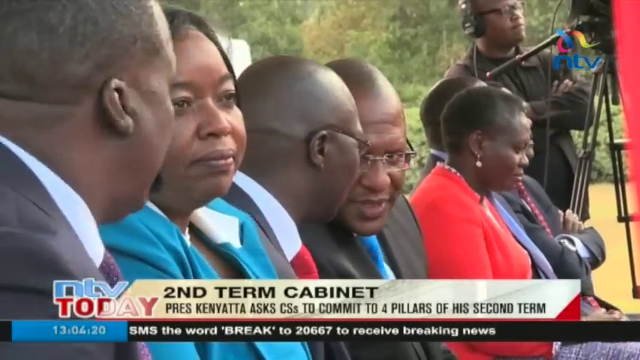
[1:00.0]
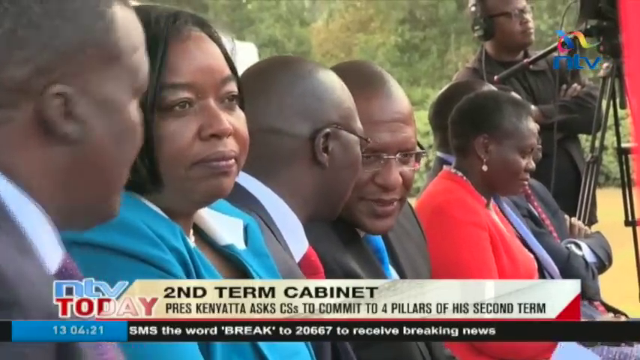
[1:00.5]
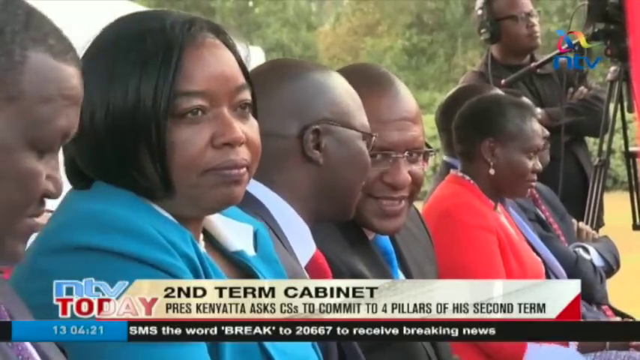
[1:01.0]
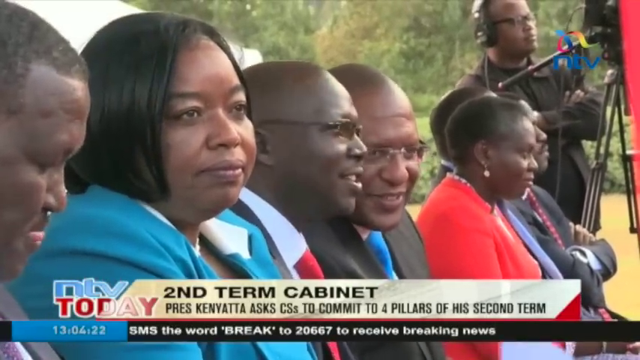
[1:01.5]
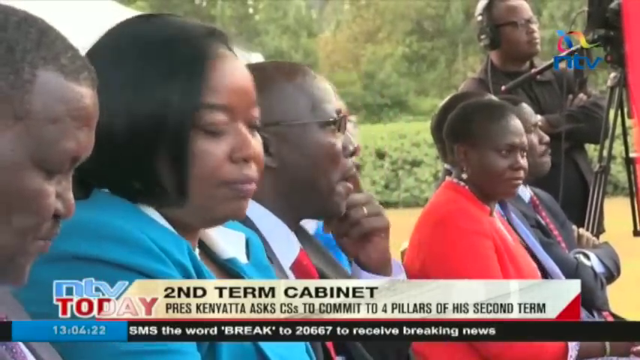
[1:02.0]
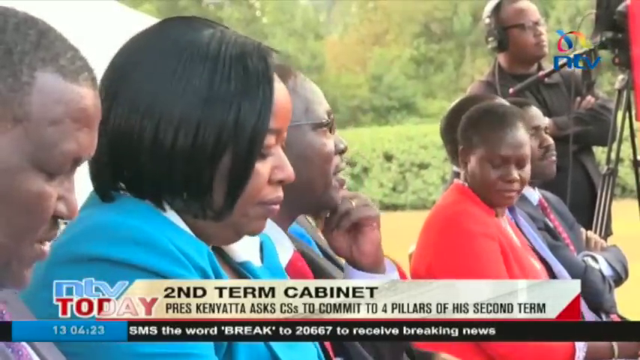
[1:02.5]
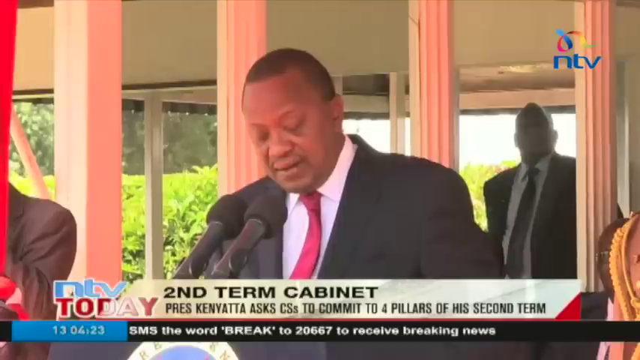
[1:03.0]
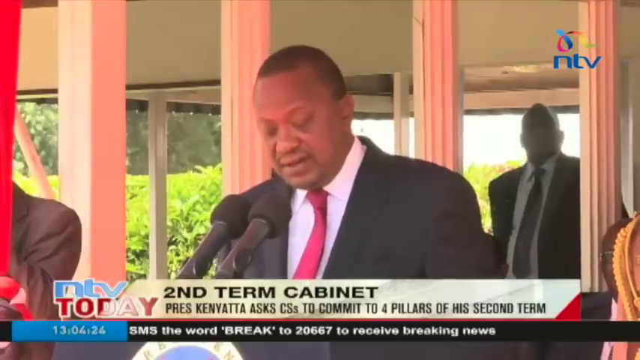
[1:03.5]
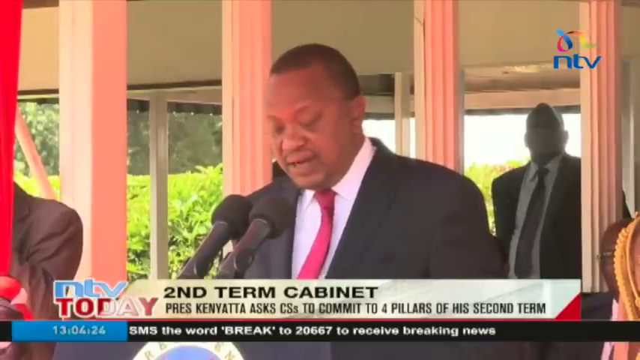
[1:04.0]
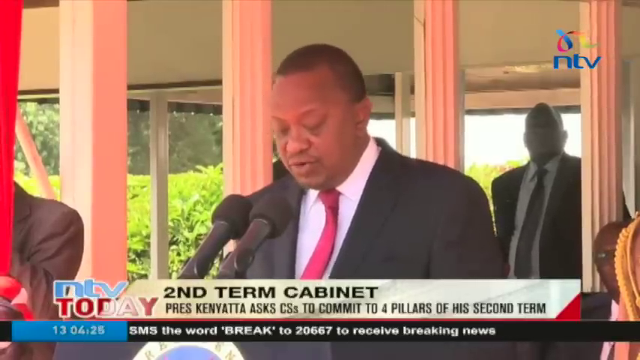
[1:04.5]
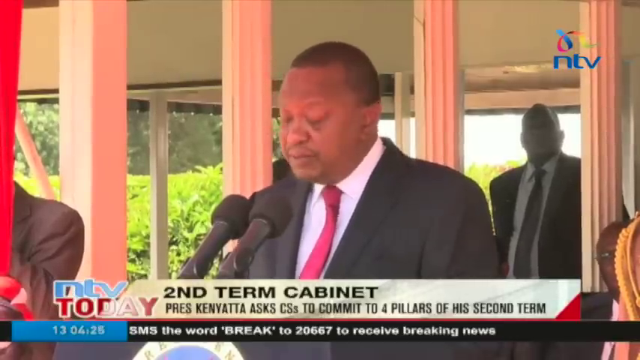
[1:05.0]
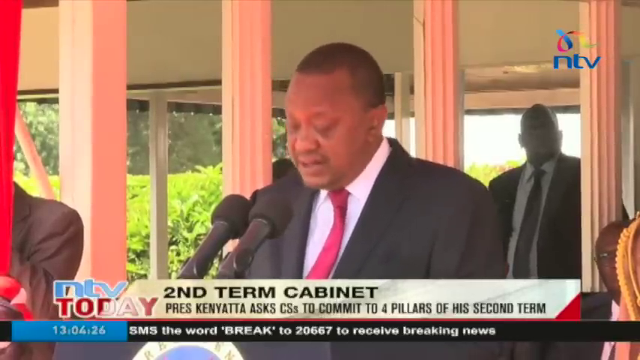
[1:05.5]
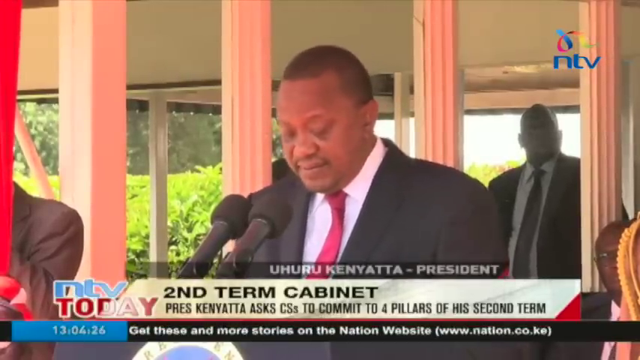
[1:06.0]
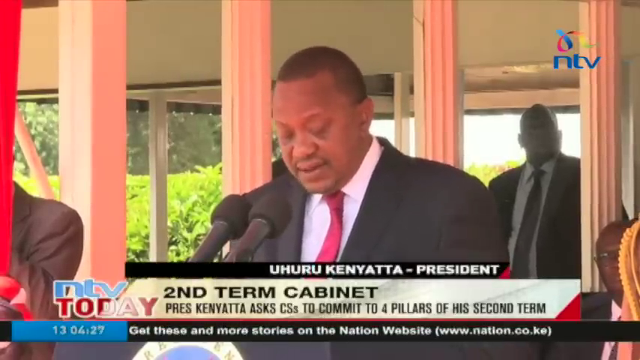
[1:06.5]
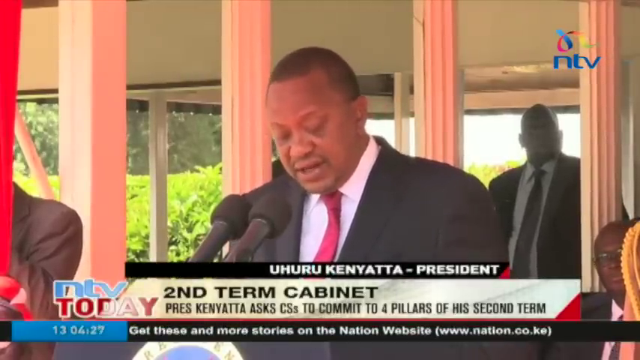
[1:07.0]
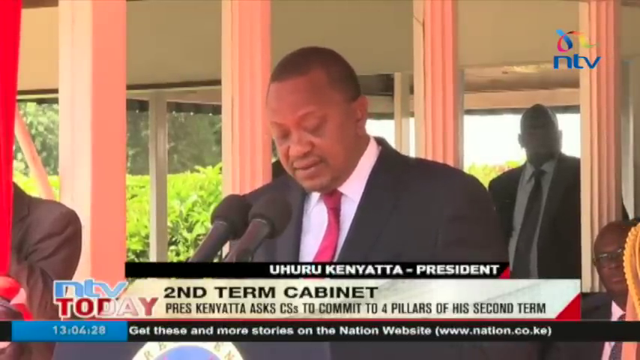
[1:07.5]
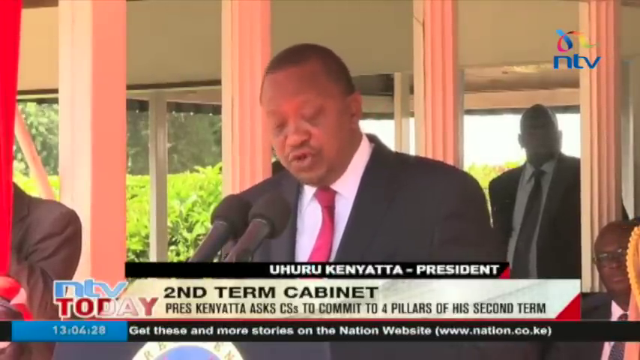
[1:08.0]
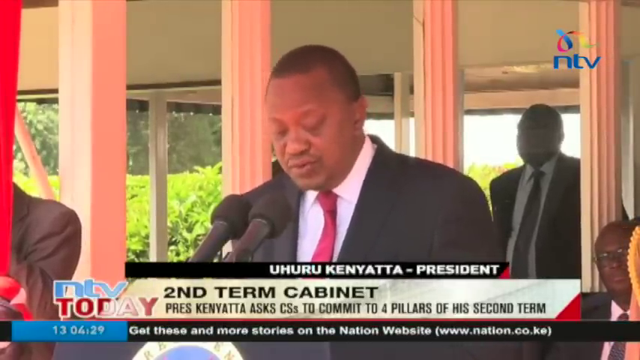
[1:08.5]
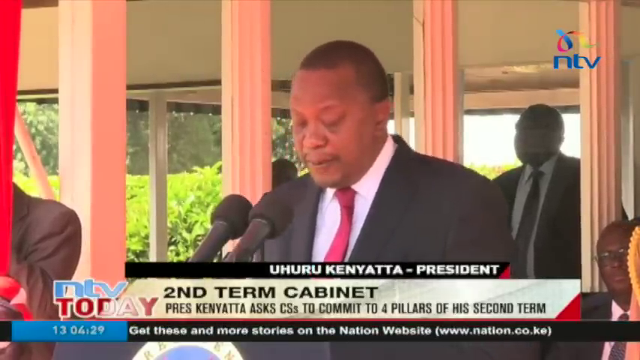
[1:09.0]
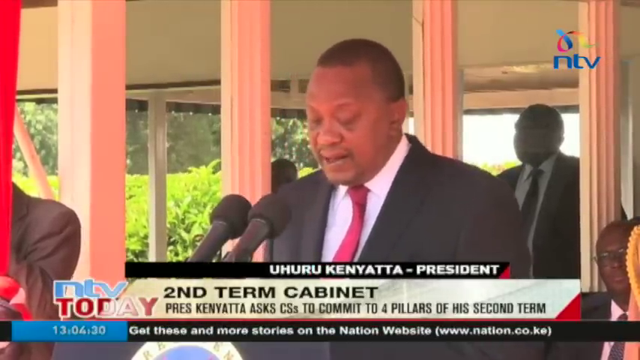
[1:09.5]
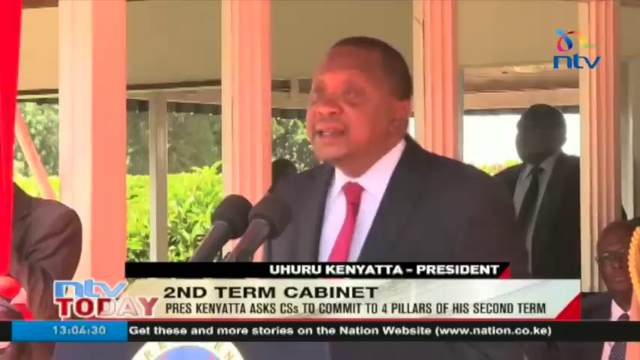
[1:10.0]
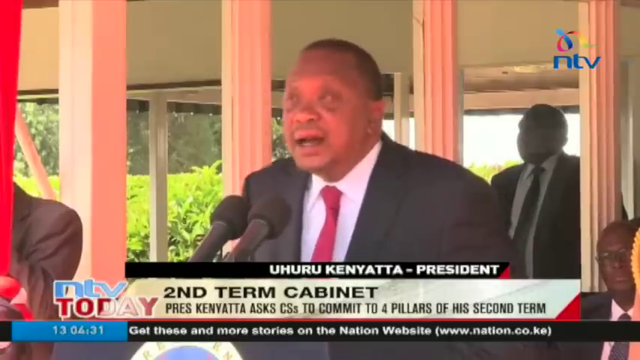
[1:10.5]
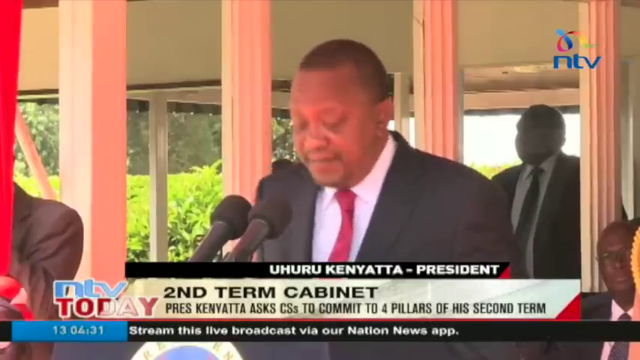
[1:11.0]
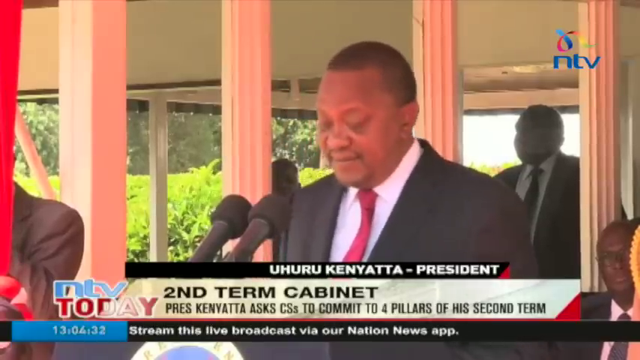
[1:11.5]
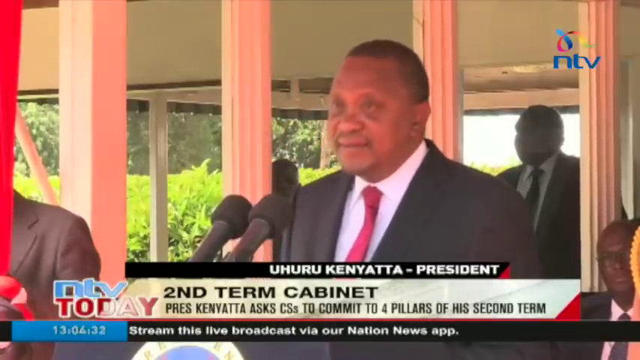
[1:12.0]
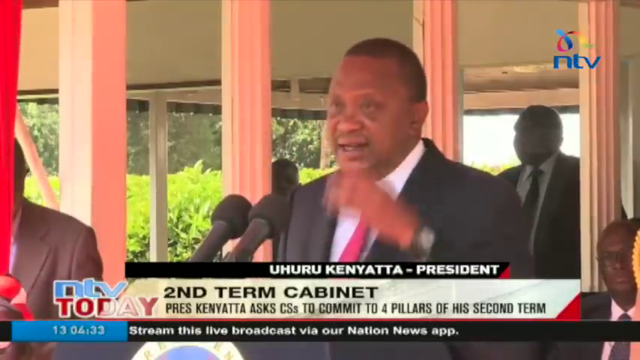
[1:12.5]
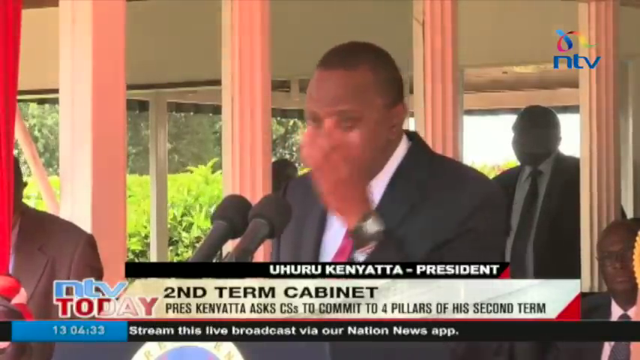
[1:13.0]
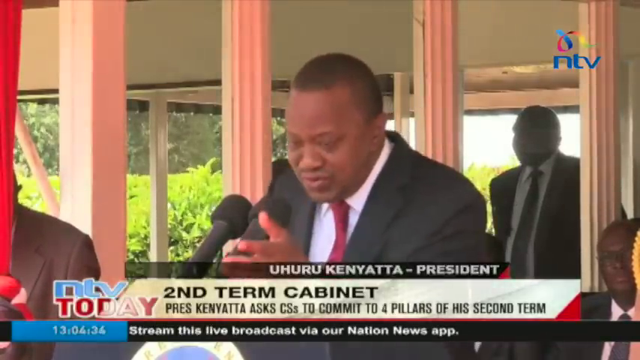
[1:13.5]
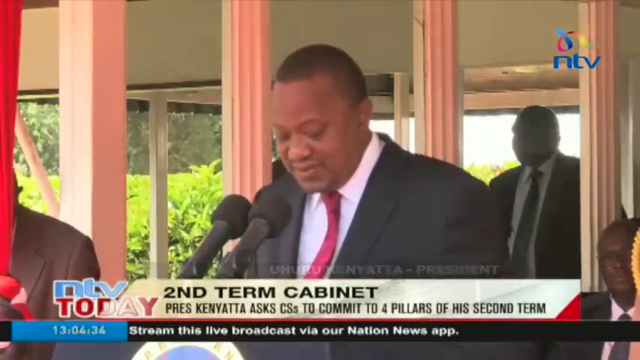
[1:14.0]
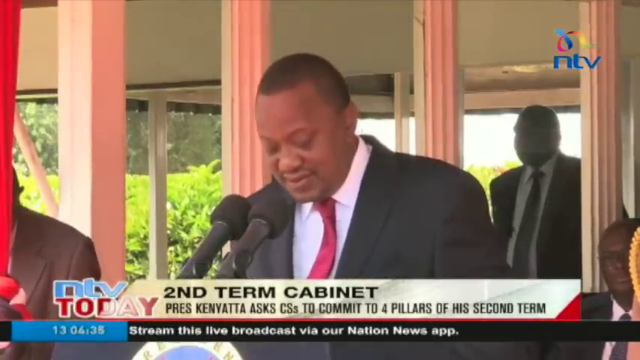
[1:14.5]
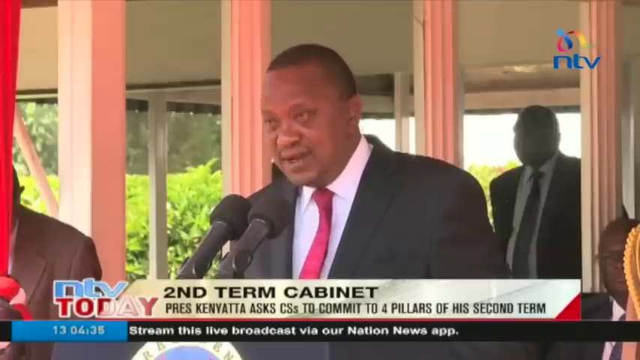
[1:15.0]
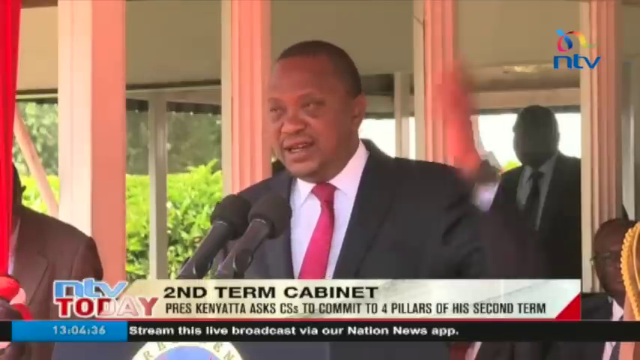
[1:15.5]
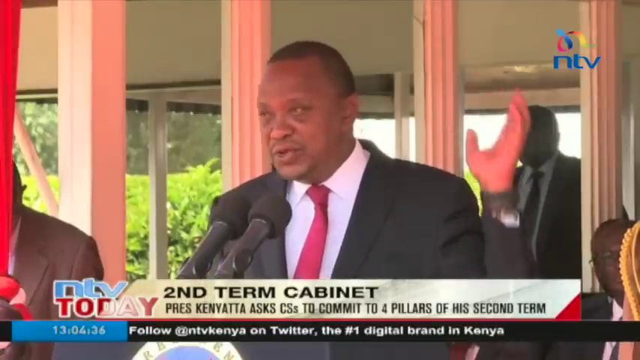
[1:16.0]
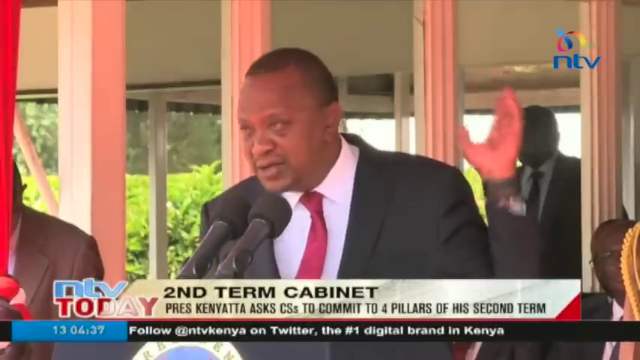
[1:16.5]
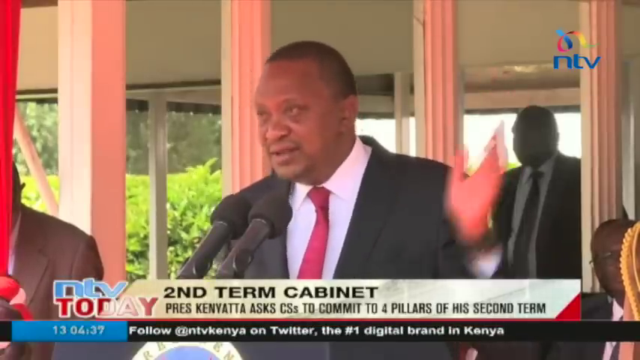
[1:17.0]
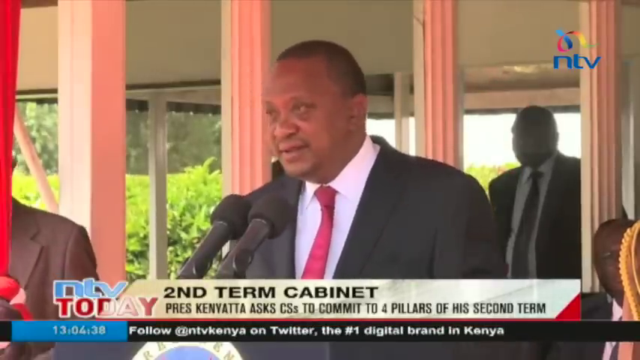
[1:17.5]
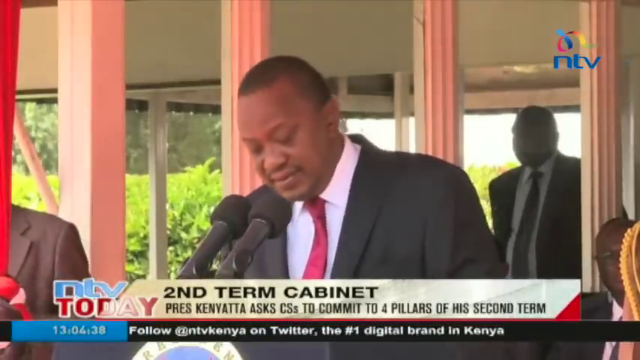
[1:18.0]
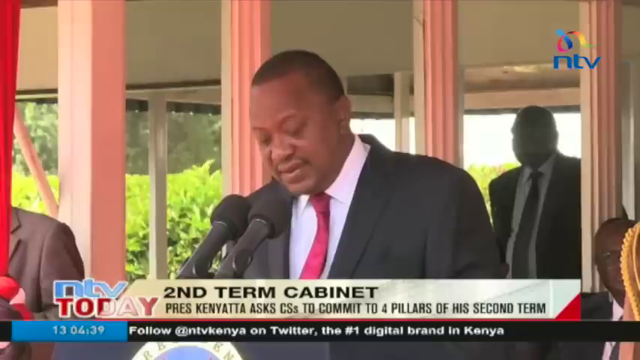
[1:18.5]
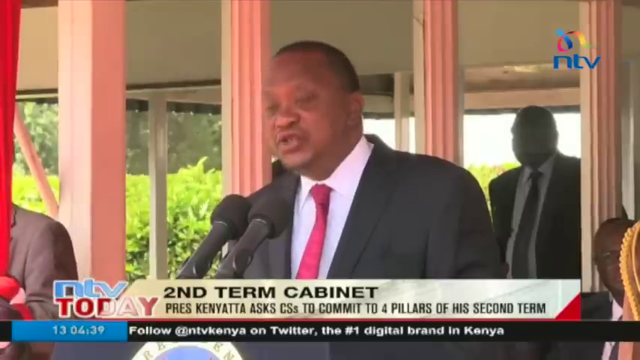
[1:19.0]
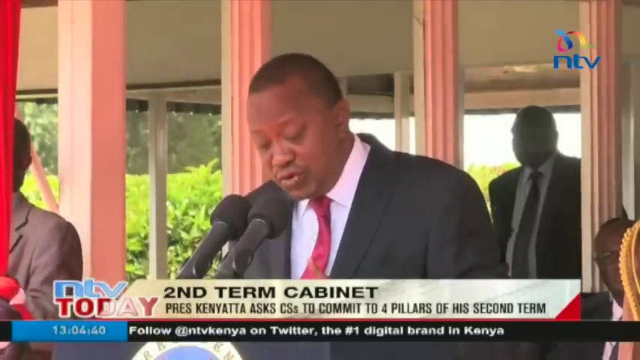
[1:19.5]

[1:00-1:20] The NTV news report shows the second term cabinet conference, with the headline "second term cabinet." President Uhuru Kenyatta stands at the pulpit in front of the cabinet giving his speech, with two microphones in front of him. Behind him some men are also standing, apparently some of his guards and secretaries. The news is read in the newsroom by two NTV news reporters.